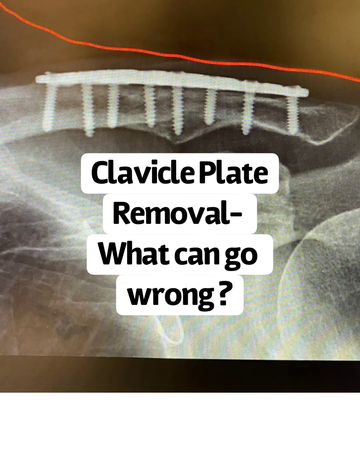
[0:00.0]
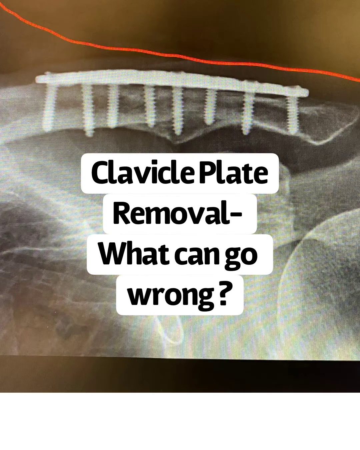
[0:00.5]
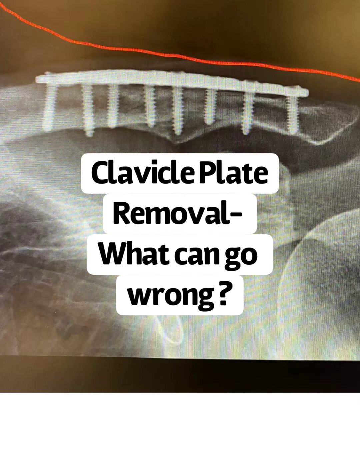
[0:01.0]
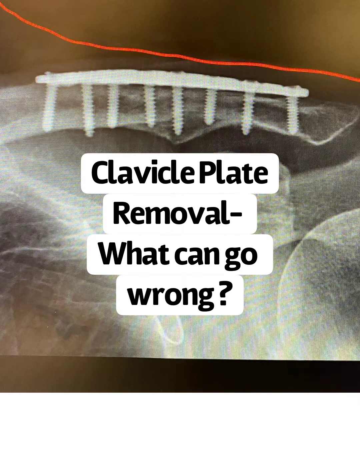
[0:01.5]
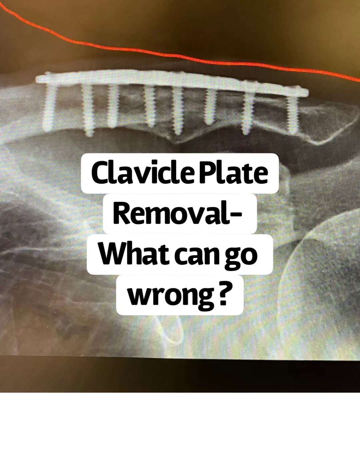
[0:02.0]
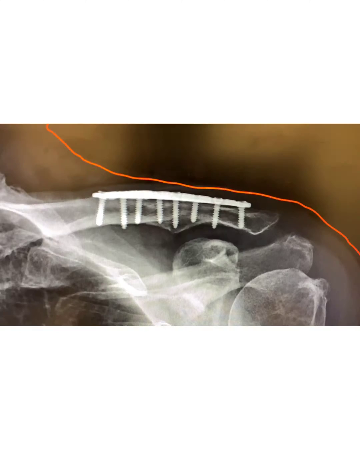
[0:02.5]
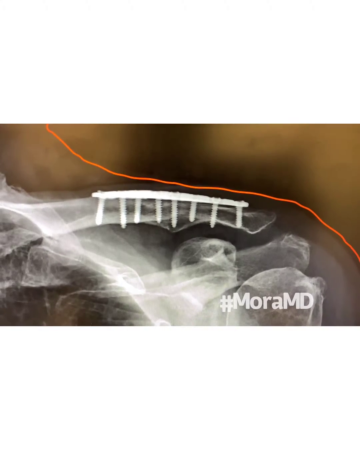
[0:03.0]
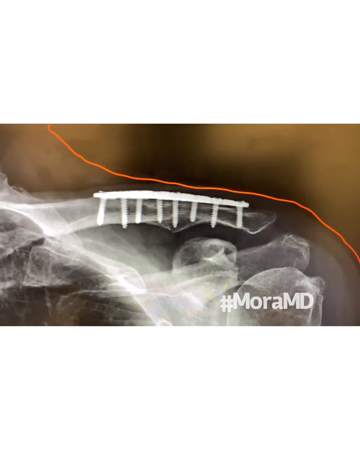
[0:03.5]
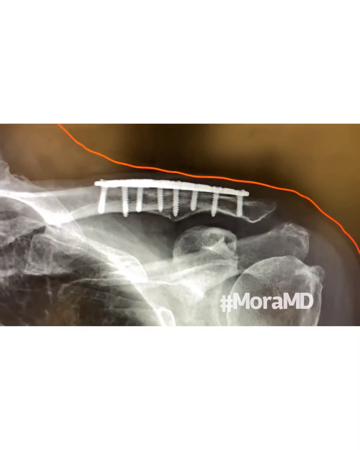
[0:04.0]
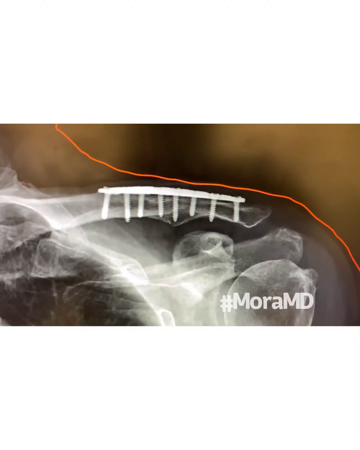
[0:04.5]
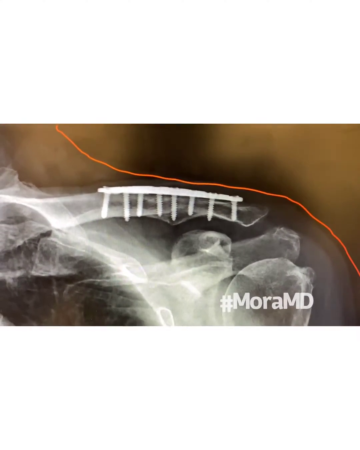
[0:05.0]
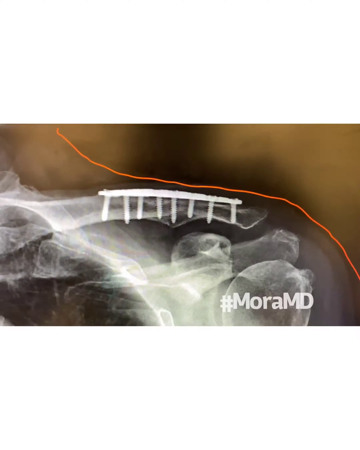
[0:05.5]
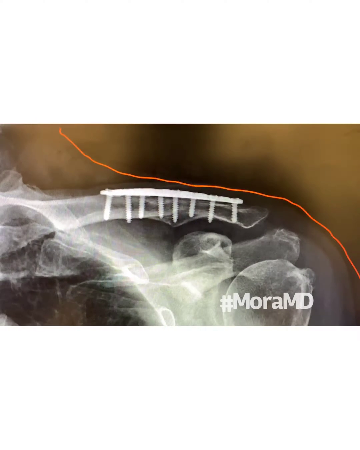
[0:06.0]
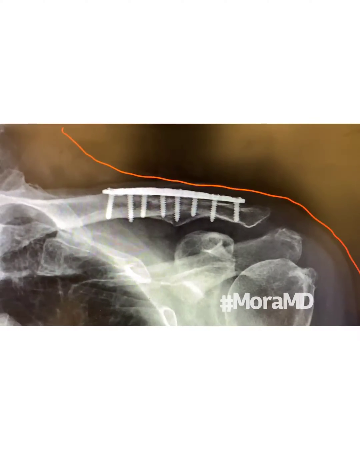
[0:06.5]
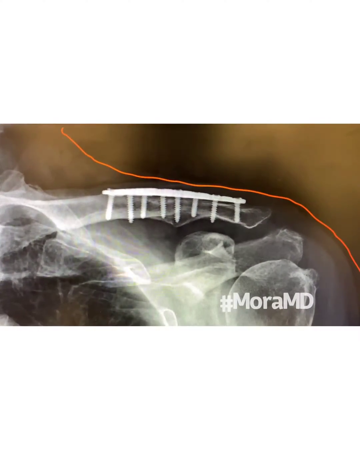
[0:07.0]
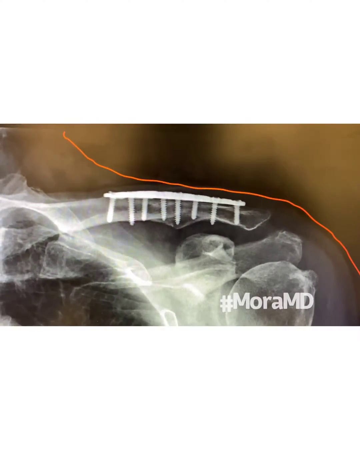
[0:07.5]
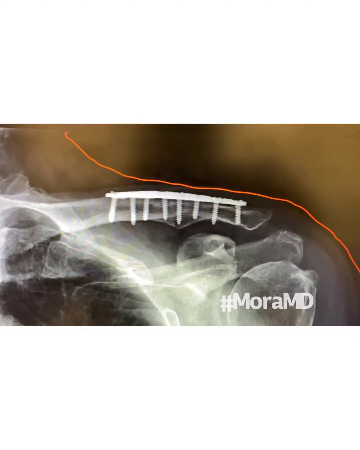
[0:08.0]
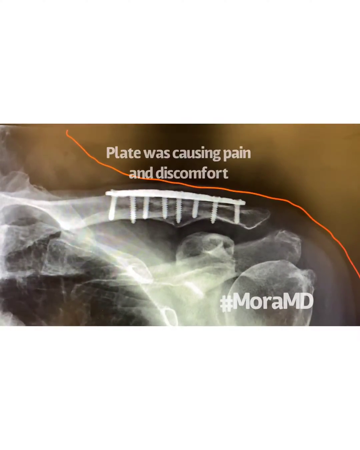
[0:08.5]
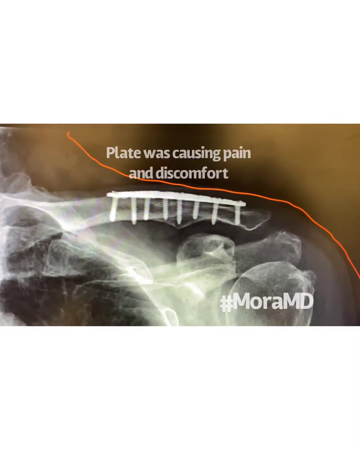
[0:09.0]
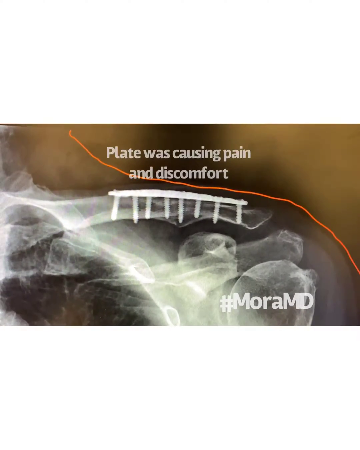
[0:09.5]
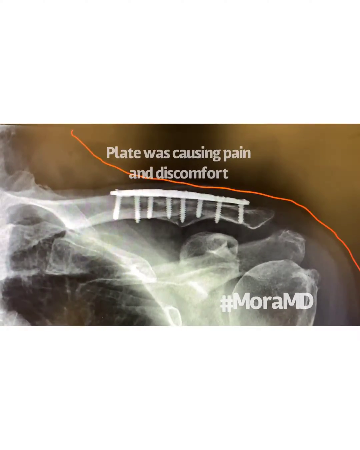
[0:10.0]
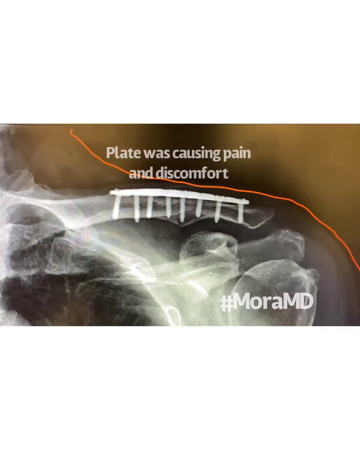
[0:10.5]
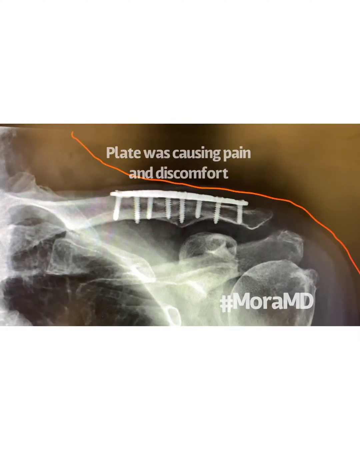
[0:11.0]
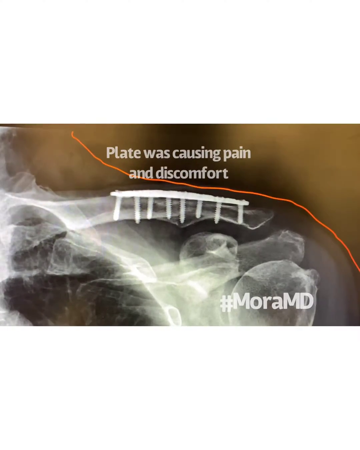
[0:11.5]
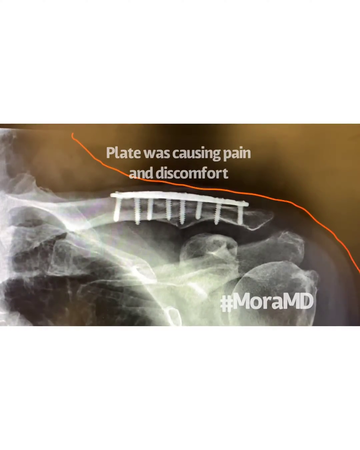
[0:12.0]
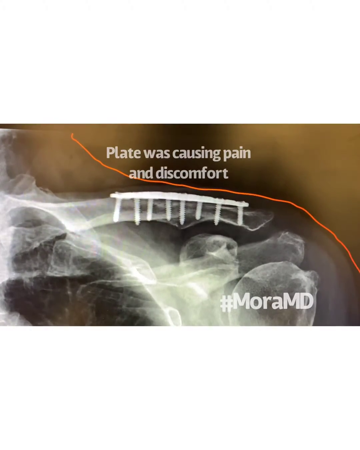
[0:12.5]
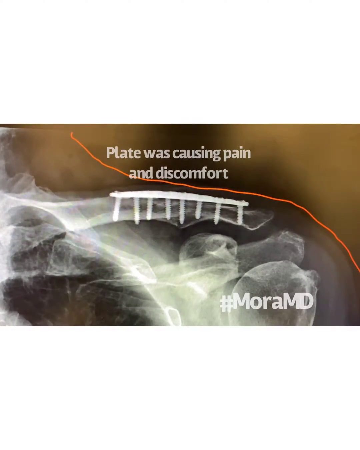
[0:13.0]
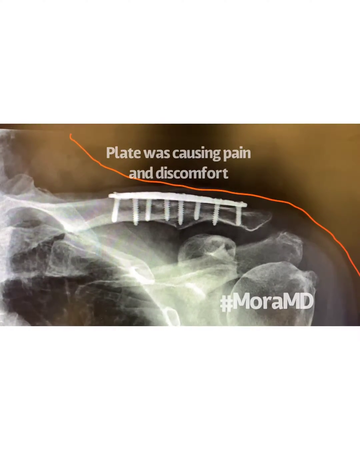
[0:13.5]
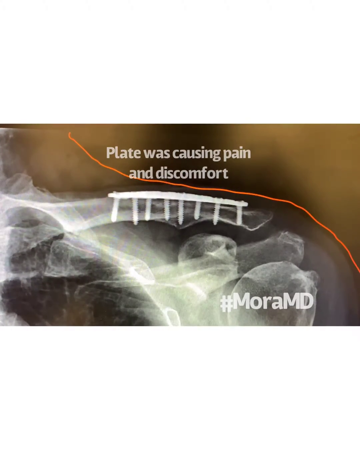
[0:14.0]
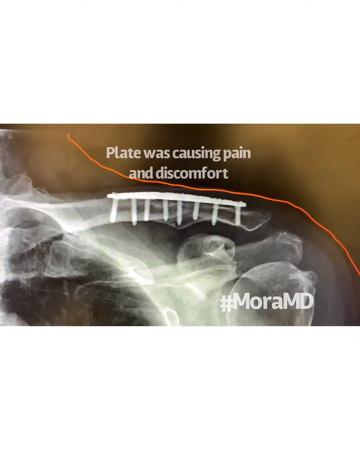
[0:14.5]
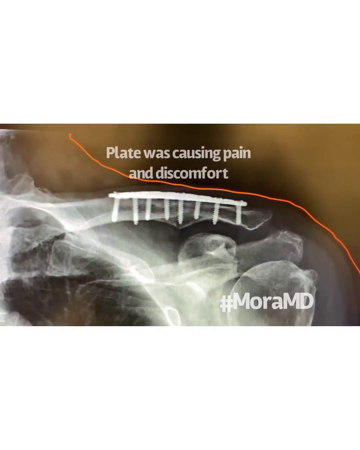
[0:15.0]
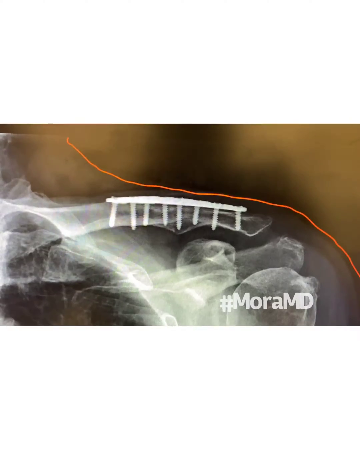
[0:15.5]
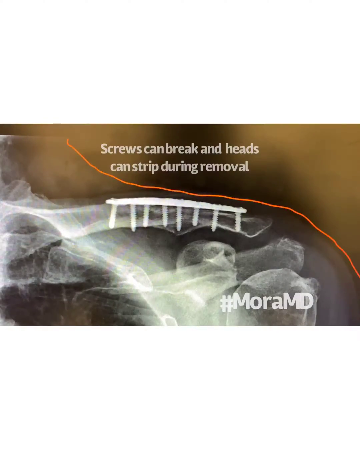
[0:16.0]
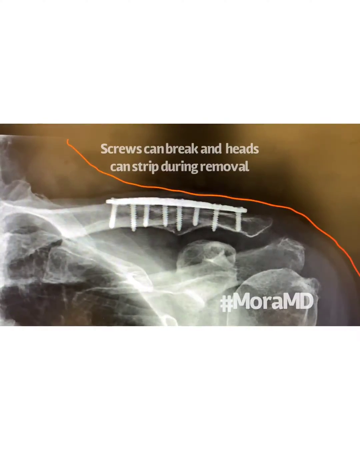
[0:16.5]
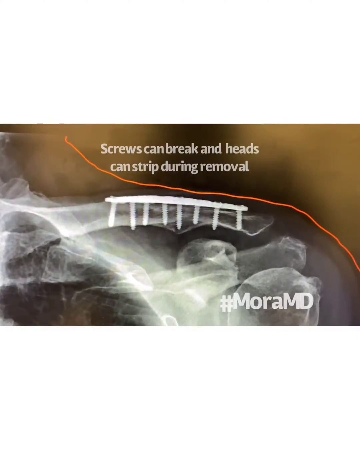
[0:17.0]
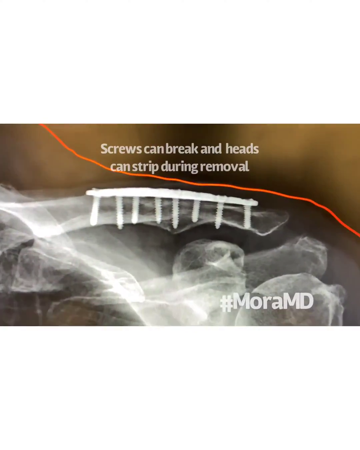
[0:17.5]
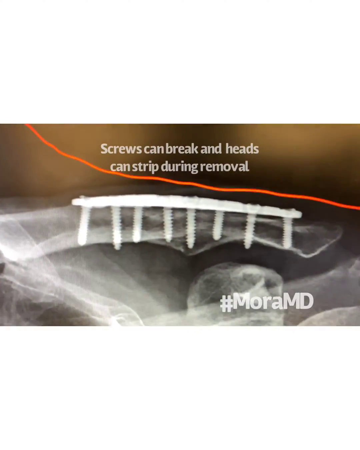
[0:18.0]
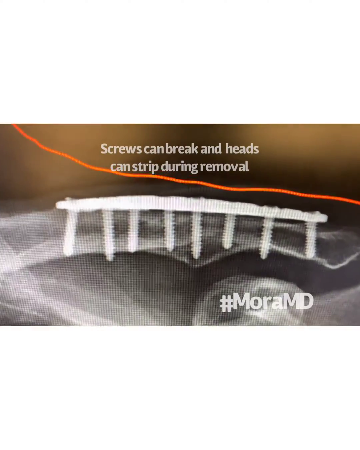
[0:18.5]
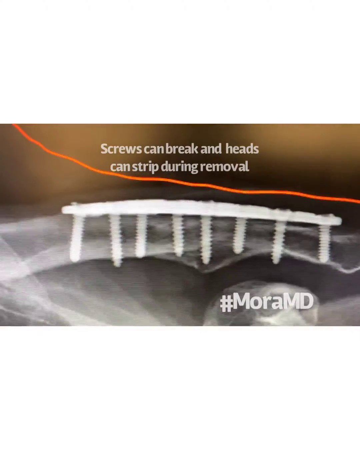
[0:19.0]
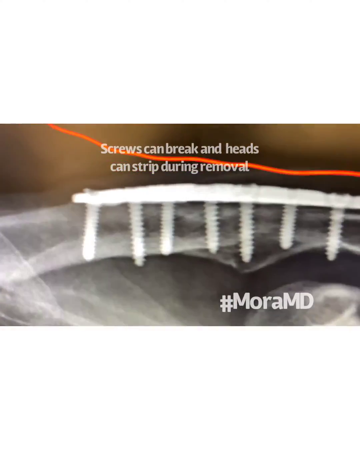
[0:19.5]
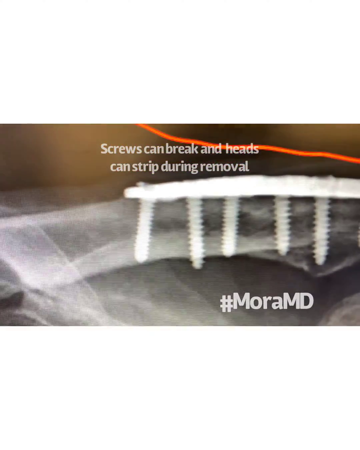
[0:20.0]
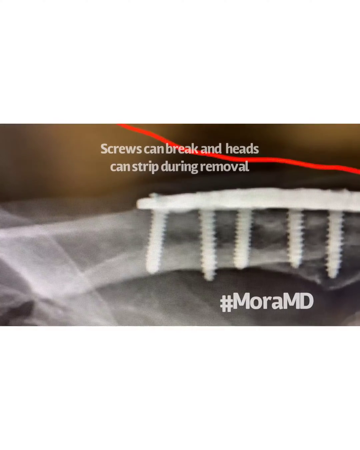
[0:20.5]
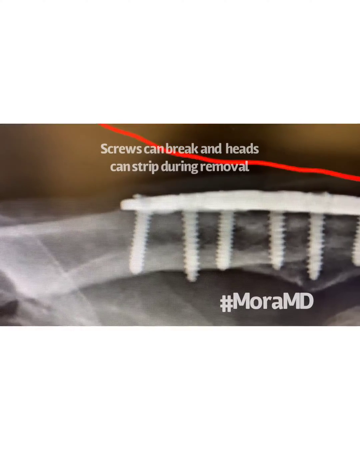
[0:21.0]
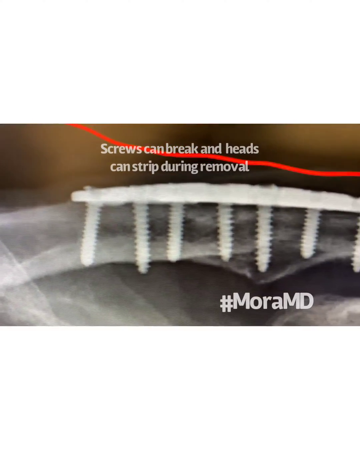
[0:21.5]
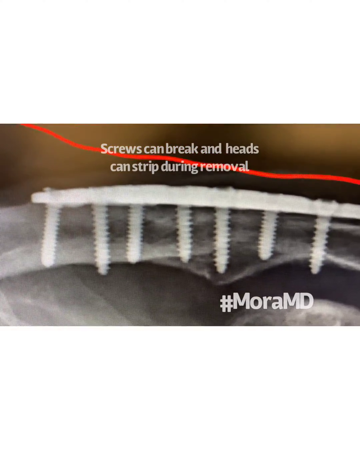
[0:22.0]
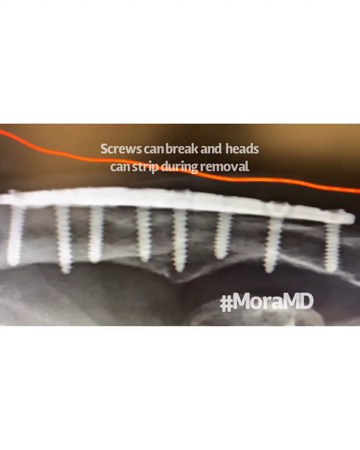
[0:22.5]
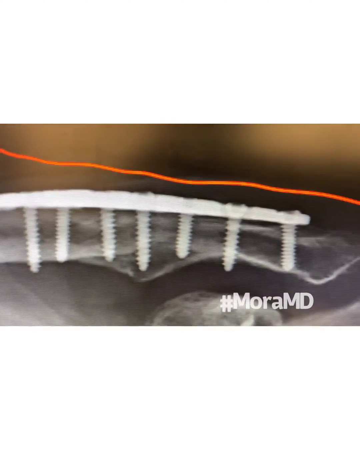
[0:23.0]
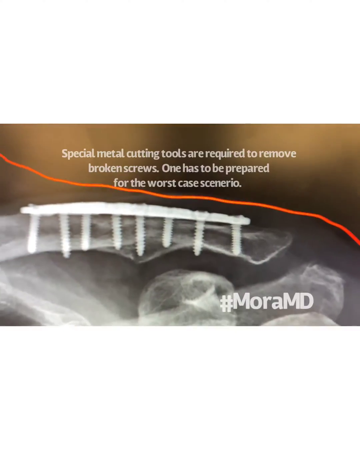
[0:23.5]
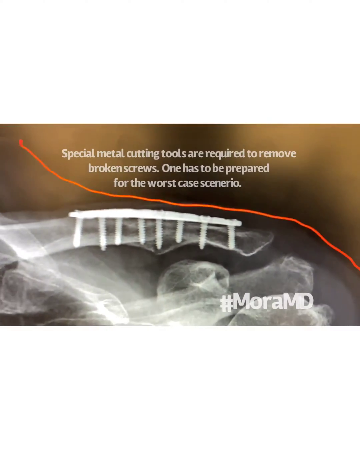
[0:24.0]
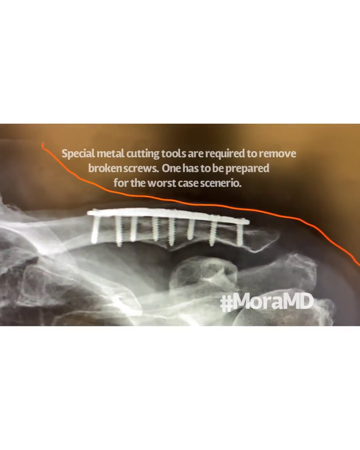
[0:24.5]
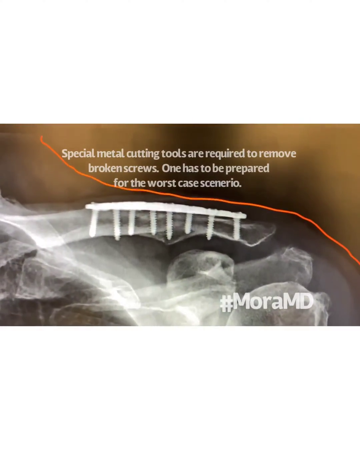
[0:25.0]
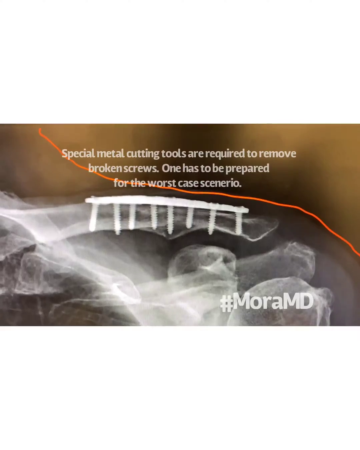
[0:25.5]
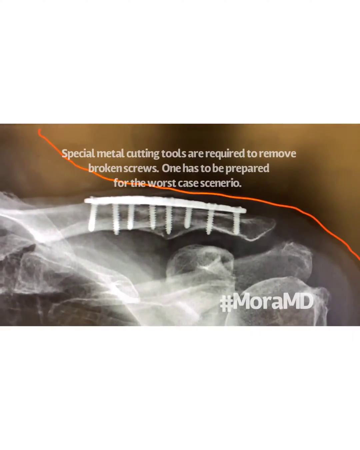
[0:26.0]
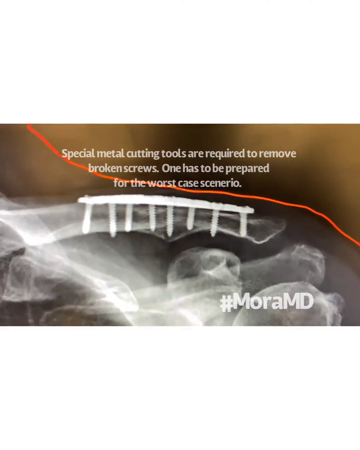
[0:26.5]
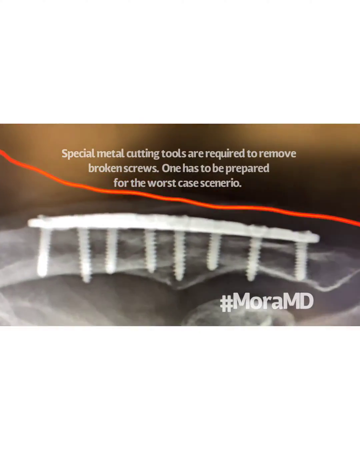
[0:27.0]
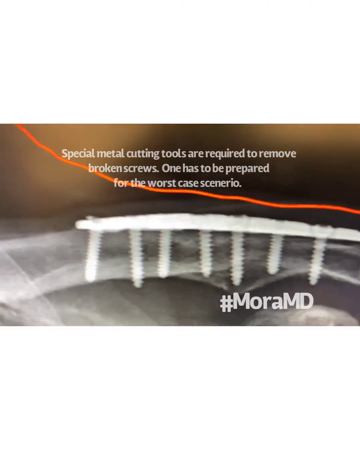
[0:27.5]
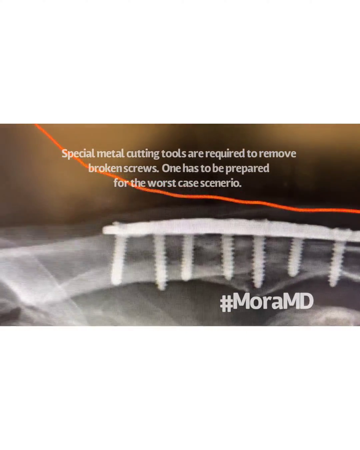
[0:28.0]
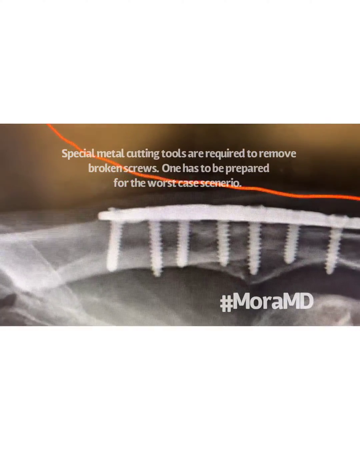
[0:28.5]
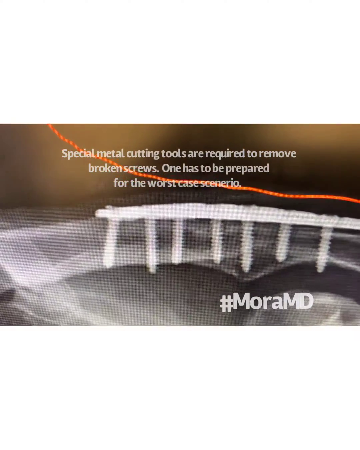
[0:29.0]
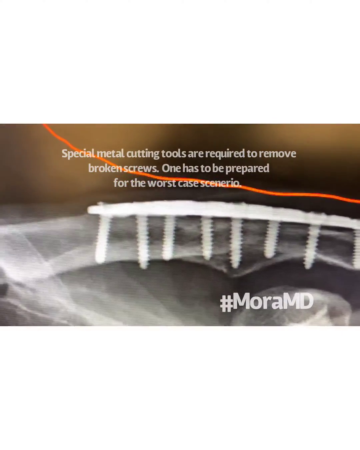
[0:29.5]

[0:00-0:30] An x-ray picture shows a long plate with screws through it; there are eight screws through the plate and, likely, through flesh. On-screen text reads "clavicle plate removal, what can go wrong?" Further text appears: "late was causing pain and discomfort" and "screws can break and heads can strip during removal." The camera shot moves in and out and is rather shaky, so this might be a view into the human body using a pin camera or some other remote camera. Text reads "special metal cutting tools are required to remove broken screws" and "one has to be prepared for the worst case scenario." The camera continues to be shaky and moving, likely a remote camera of some sort.